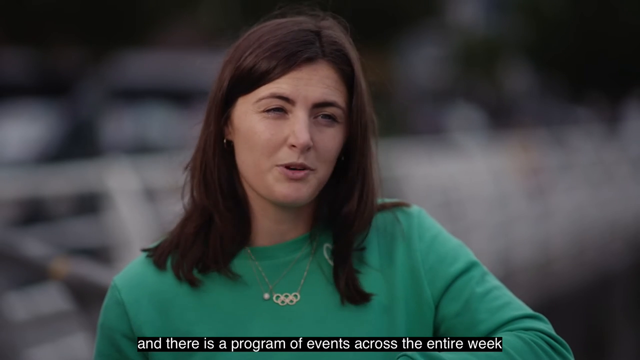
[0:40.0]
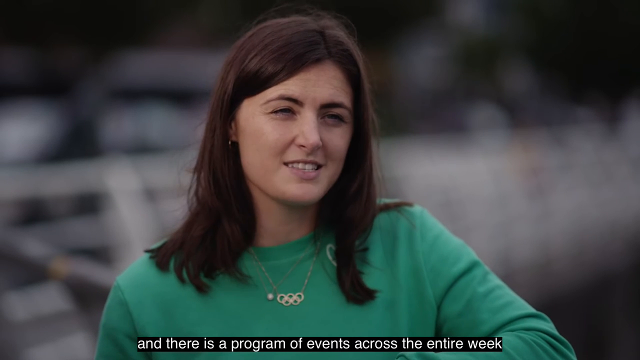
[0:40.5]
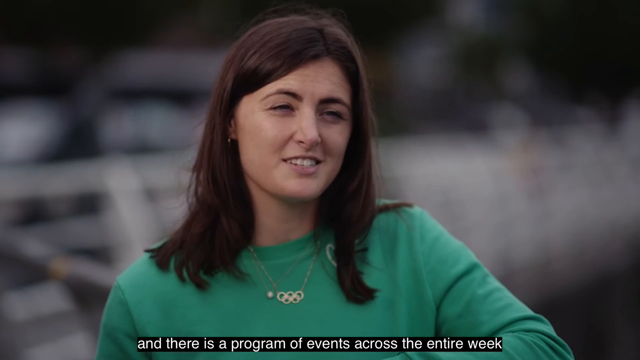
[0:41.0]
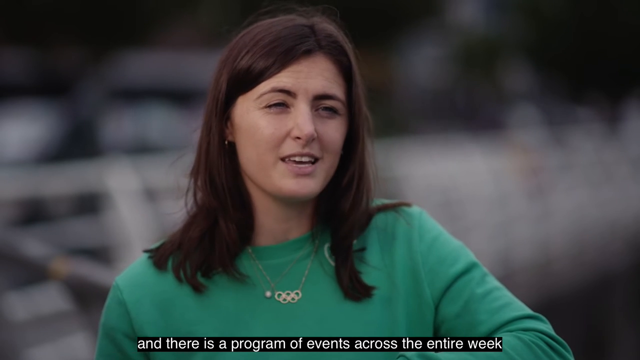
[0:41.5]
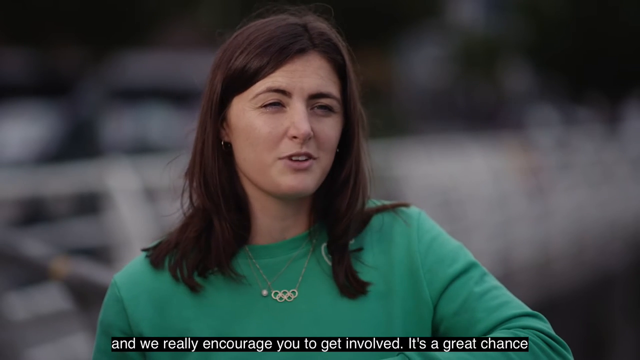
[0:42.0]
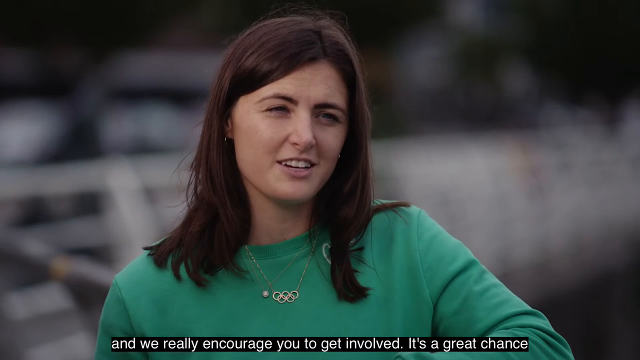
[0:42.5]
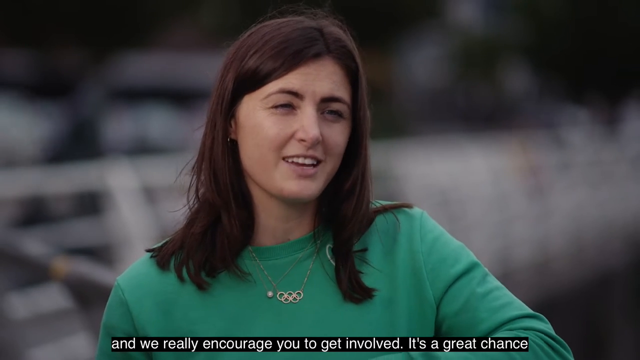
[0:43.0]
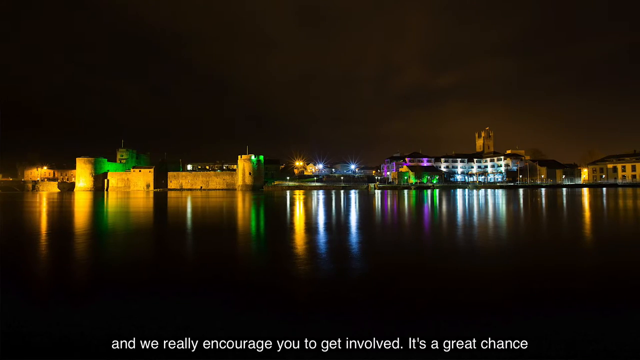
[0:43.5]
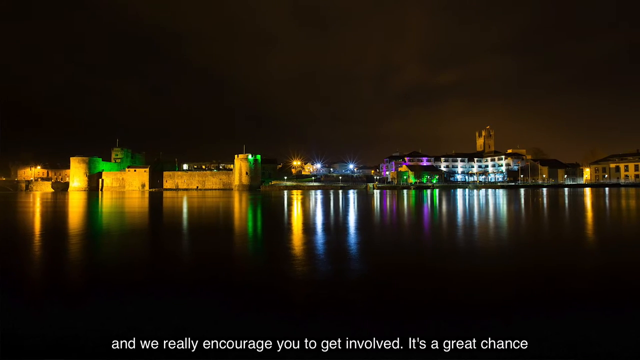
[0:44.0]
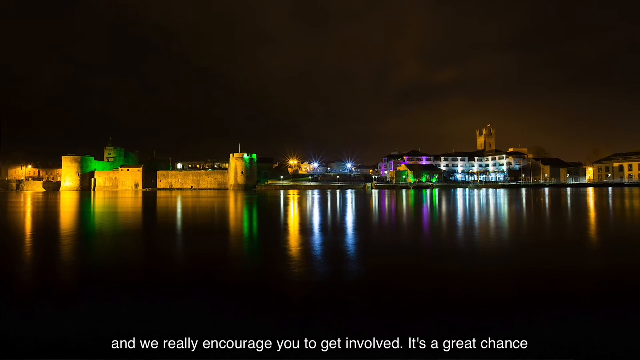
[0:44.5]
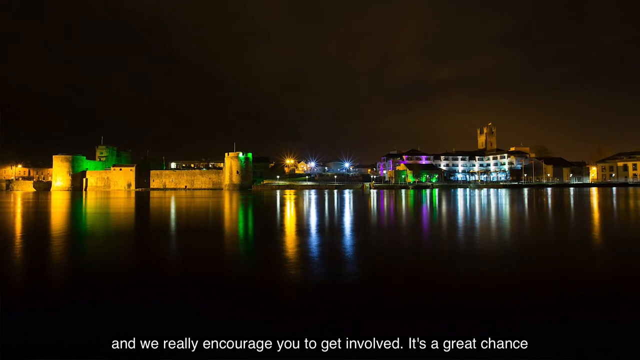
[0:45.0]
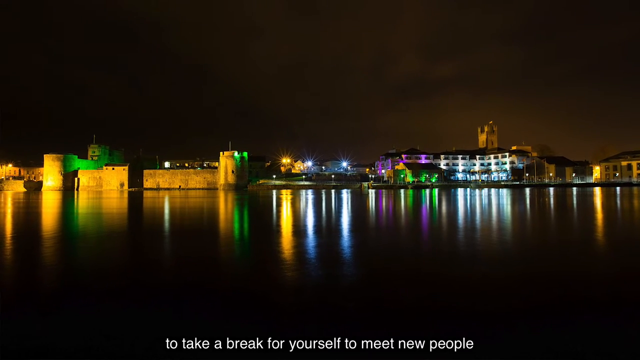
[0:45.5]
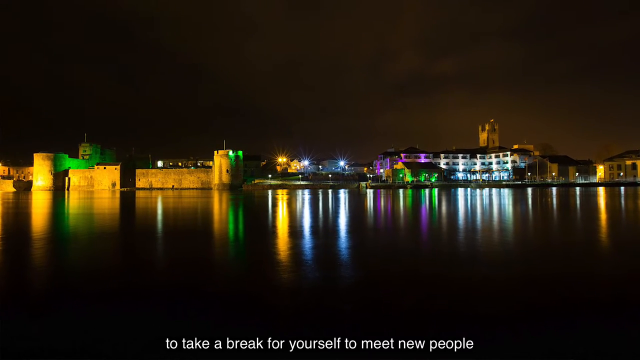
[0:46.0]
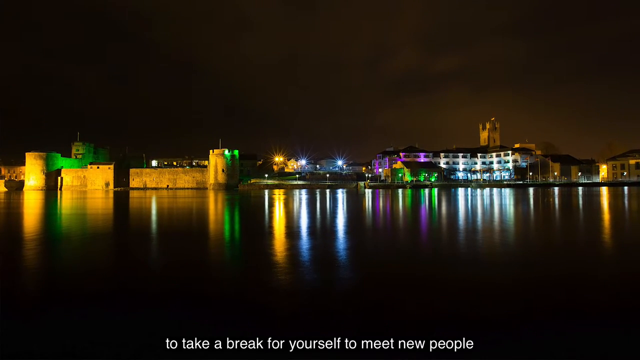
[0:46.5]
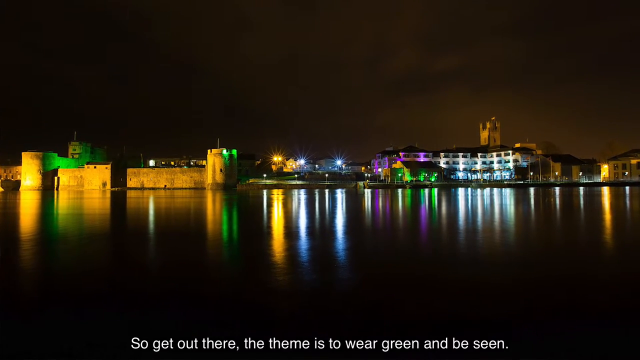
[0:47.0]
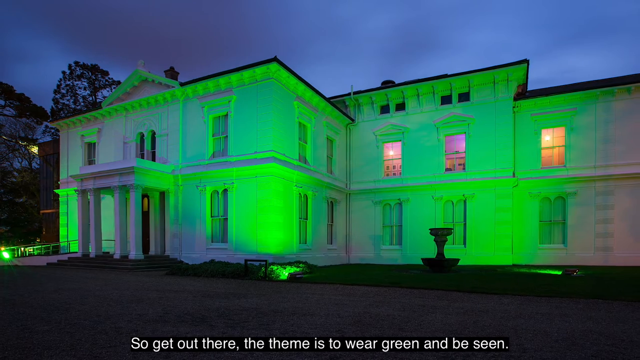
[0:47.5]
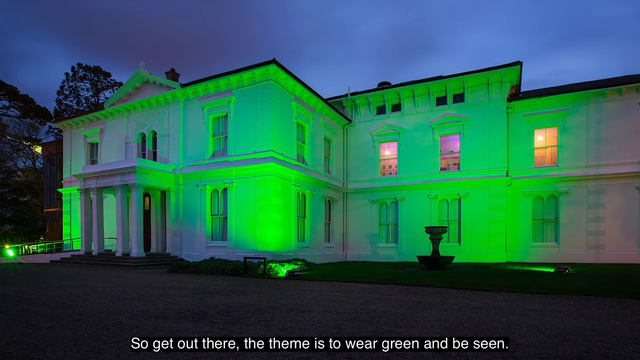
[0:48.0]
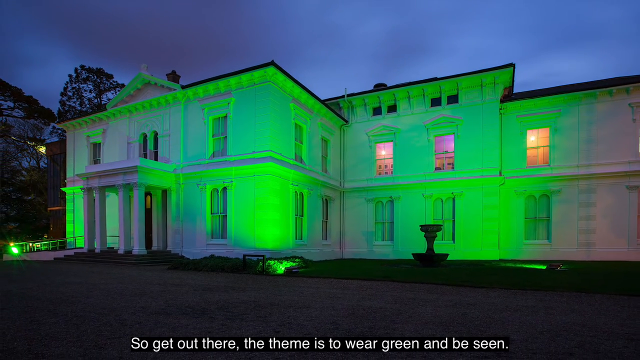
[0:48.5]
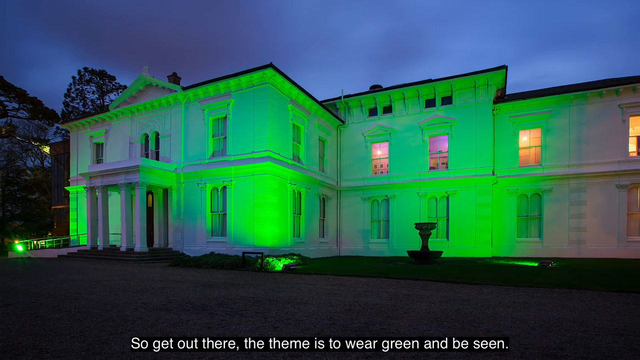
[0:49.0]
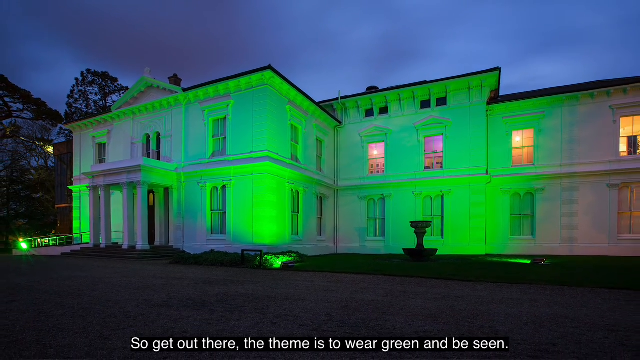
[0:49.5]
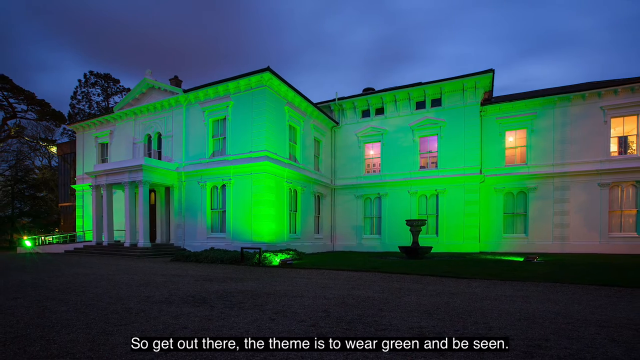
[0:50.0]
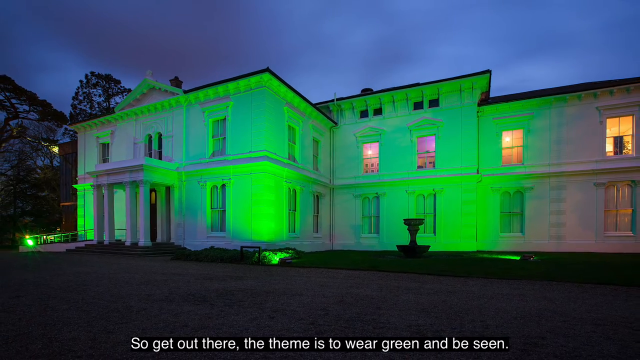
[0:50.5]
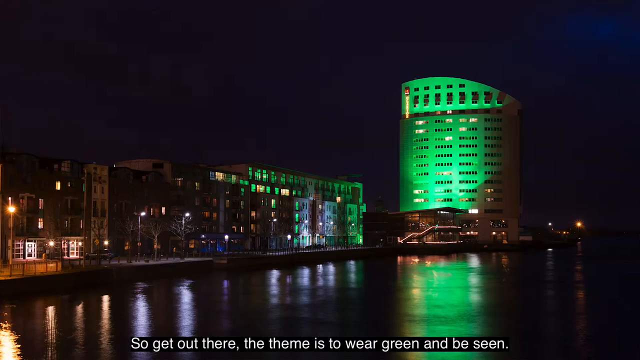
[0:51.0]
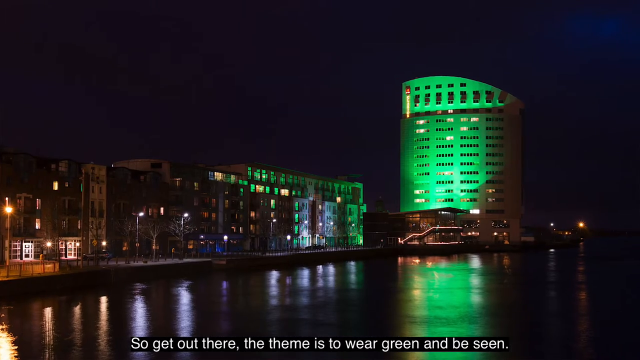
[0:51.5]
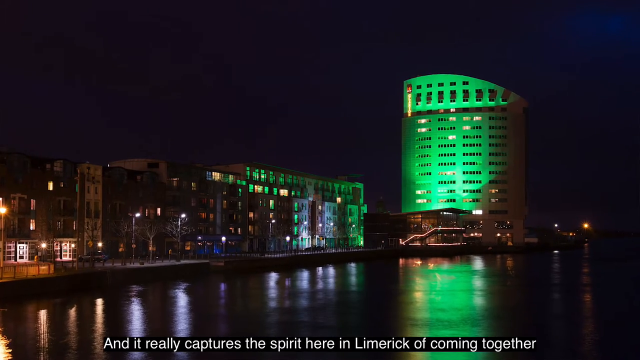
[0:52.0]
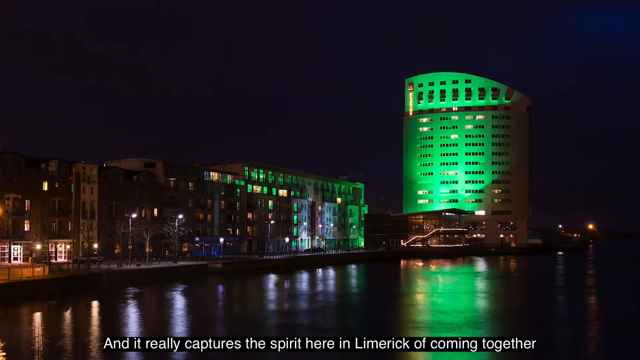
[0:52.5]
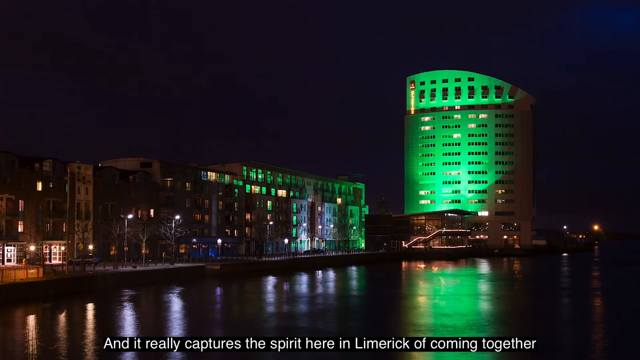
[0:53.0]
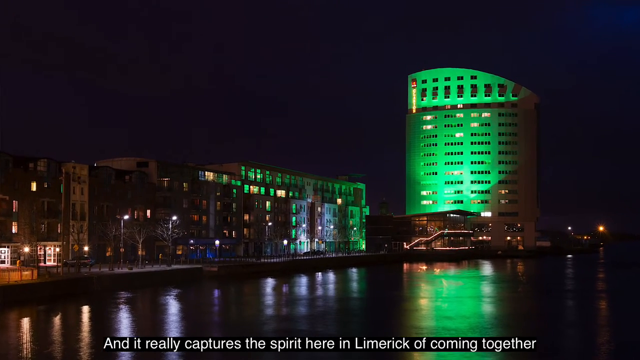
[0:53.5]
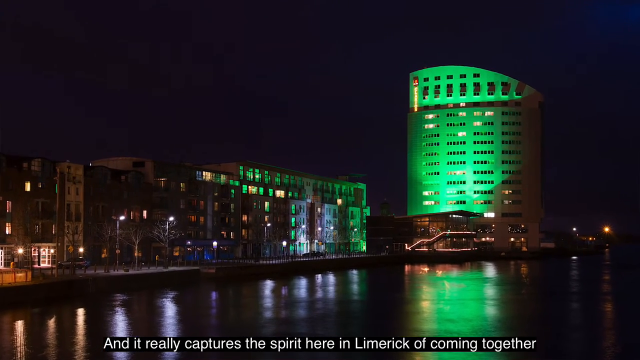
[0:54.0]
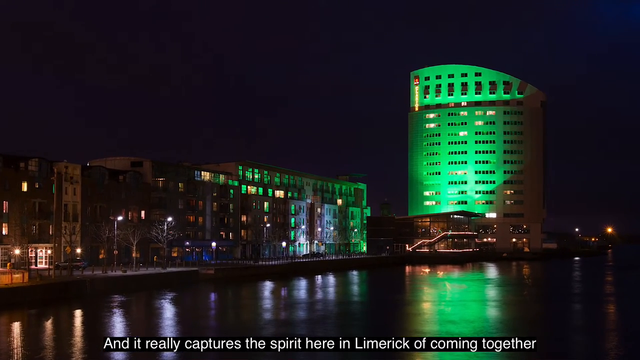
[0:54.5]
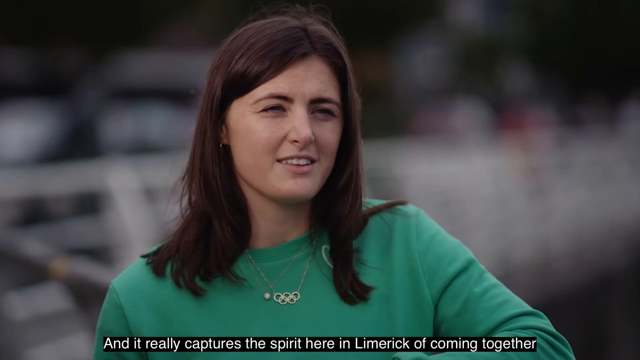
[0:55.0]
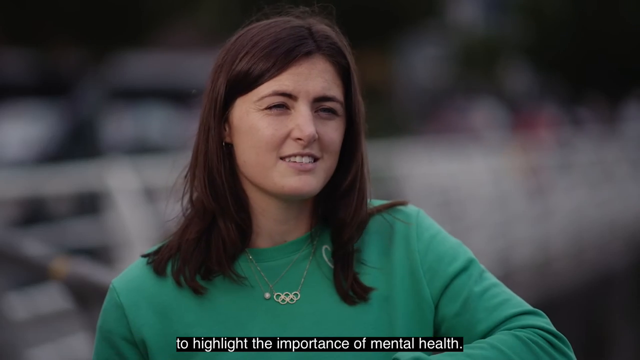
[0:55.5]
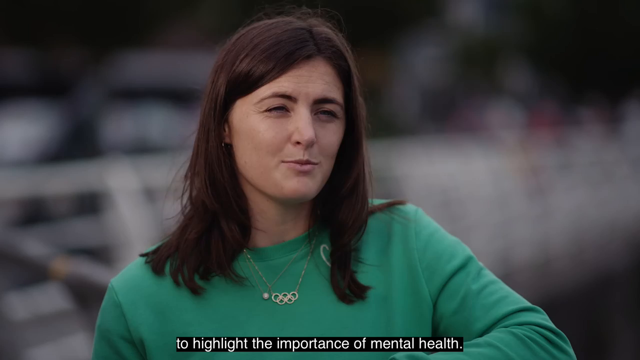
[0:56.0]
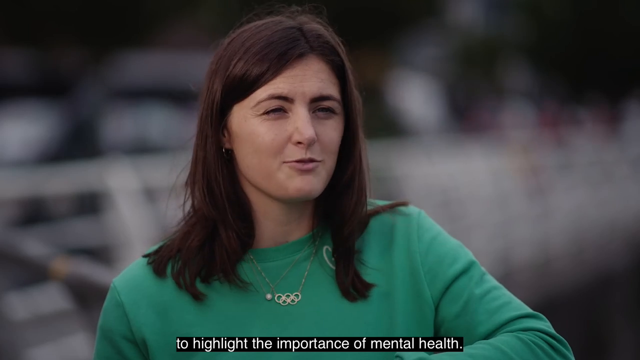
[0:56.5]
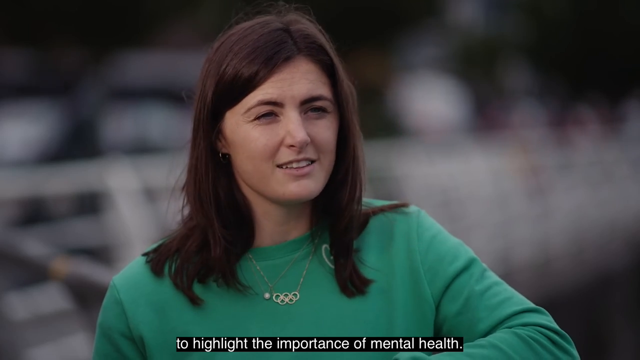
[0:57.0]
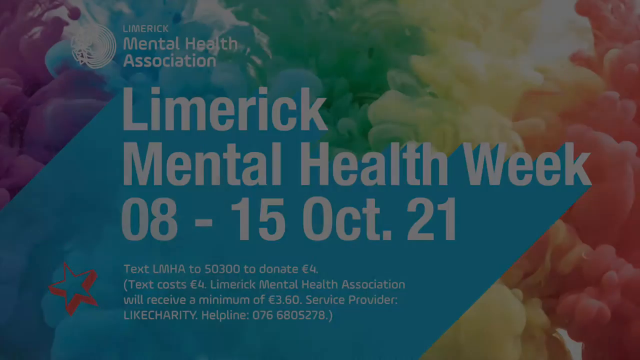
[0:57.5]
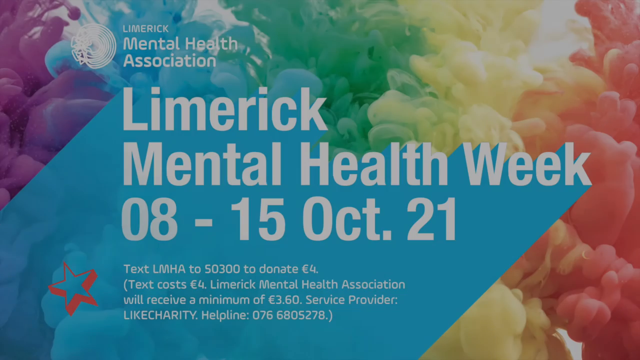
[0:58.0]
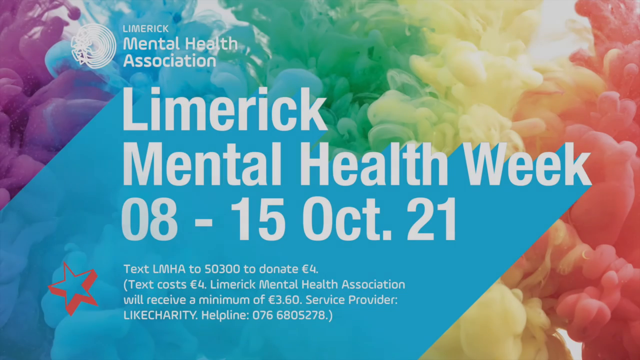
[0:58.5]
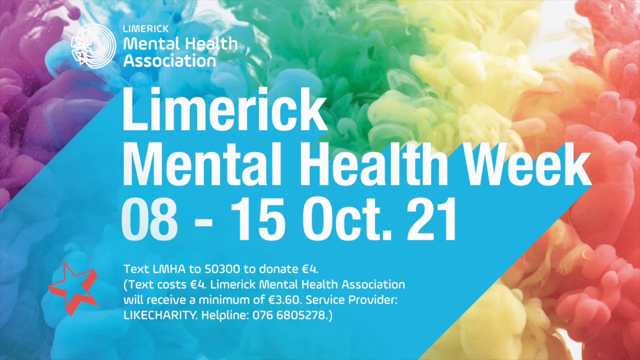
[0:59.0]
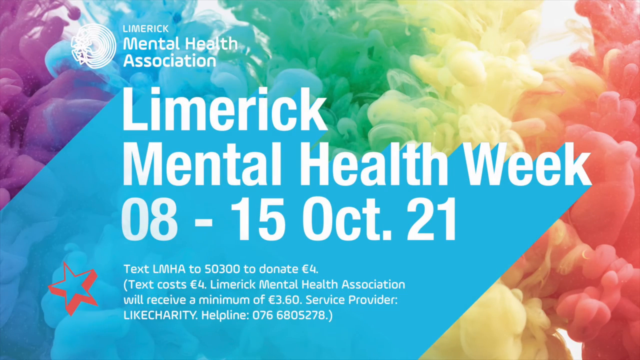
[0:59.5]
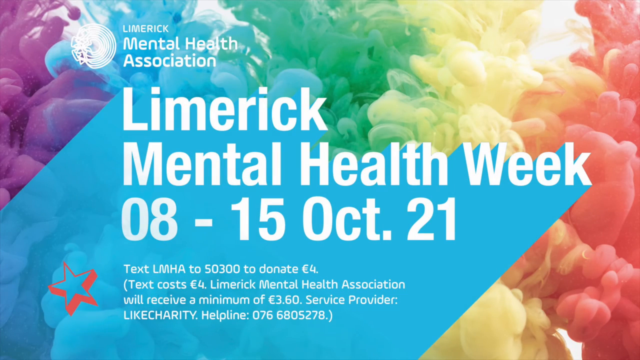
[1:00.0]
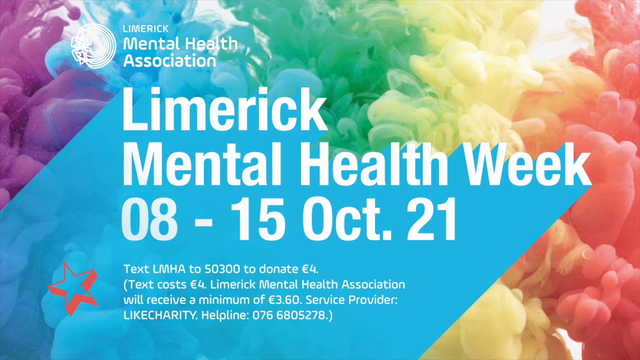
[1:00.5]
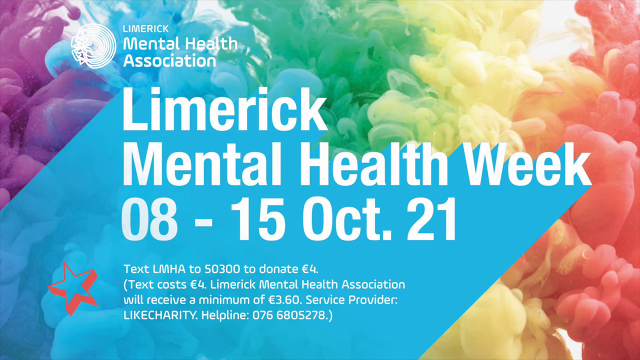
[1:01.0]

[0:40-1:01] The woman continues being interviewed. A cut shows what appears to be a night view of the city, shot over the water, with the castle on the left and a more modern building on the right. The modern building is well lit, and multi-colored lights reflect off the water. The camera slowly zooms in. A transition shows what is likely a closer view of the building on the right: a two-story white building with many windows, lit by green lights in front of it. Lights are visible in the windows on the right side of the second level, while the rest appear to be dark. Another cut shows a more urban area with streetlights, still shot from over the river, with a very tall building on the right and a very wide building on the left. The video cuts back to the woman for a moment. Then a fade shows a graphic featuring multi-colored smoke and the text "Limerick Mental Health Association, Limerick Mental Health Week, 8-15, October 21."